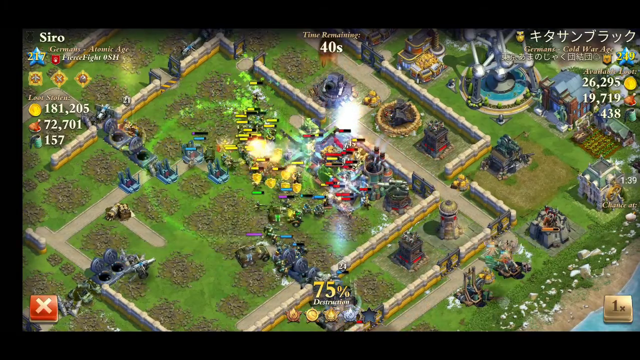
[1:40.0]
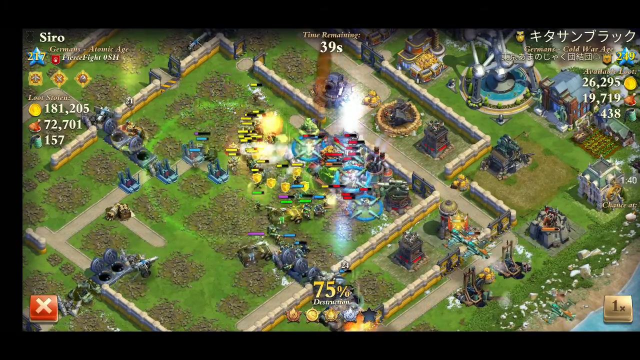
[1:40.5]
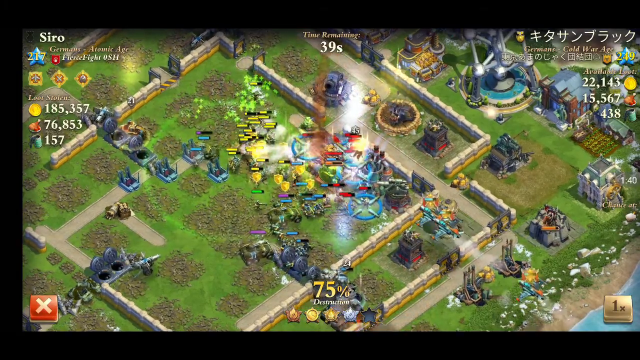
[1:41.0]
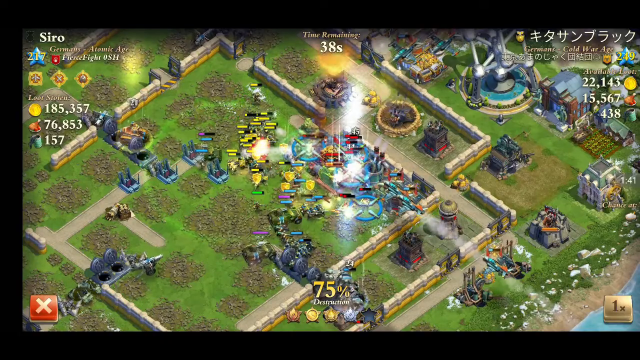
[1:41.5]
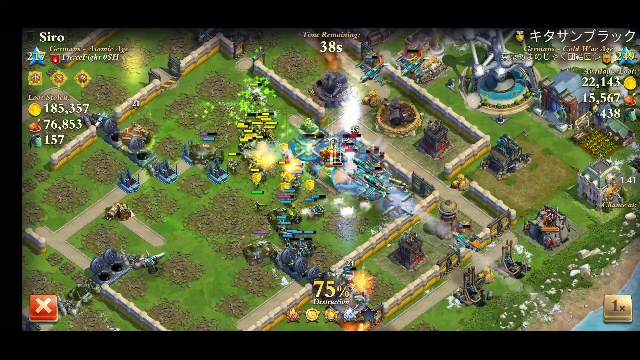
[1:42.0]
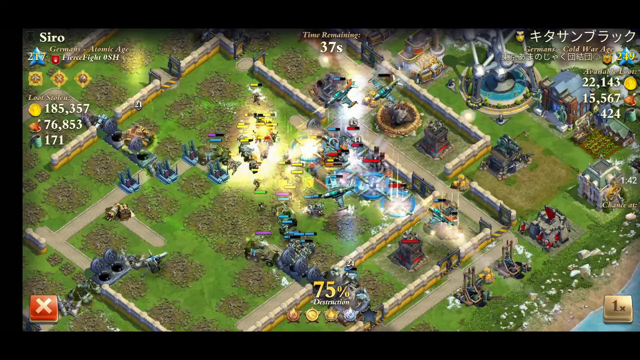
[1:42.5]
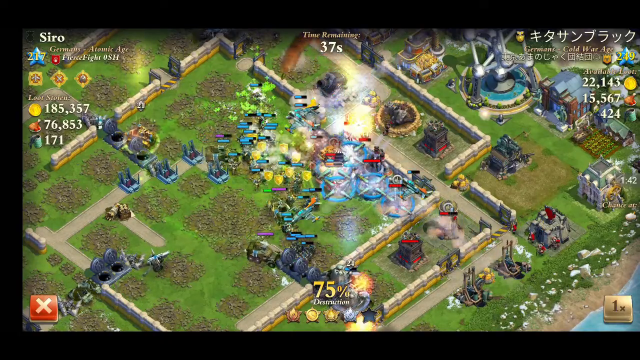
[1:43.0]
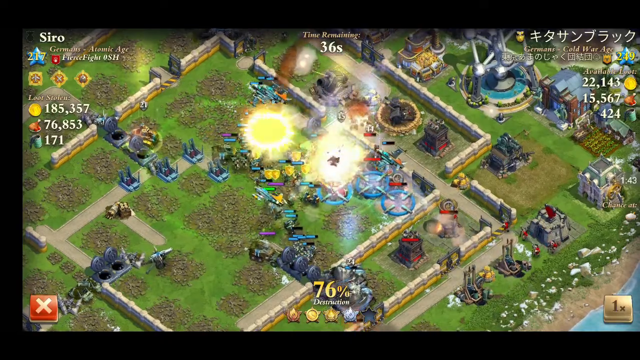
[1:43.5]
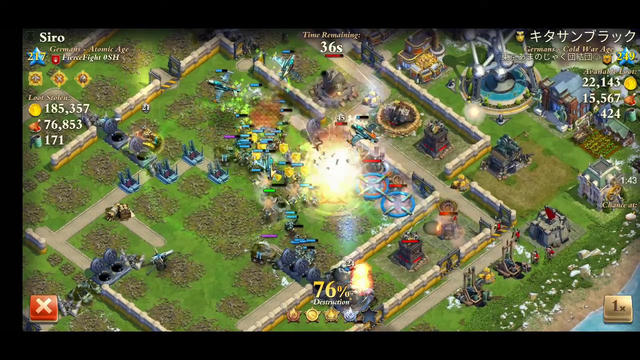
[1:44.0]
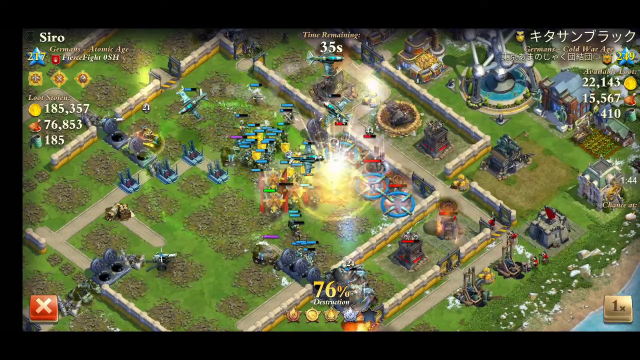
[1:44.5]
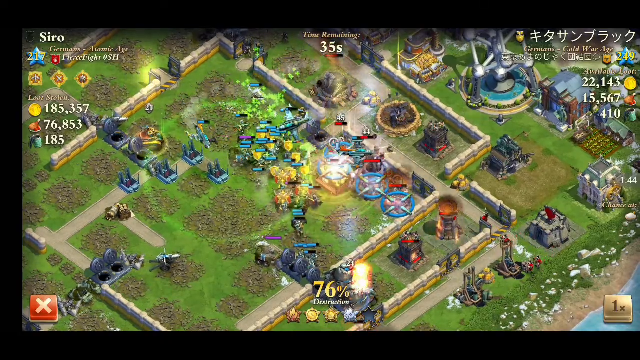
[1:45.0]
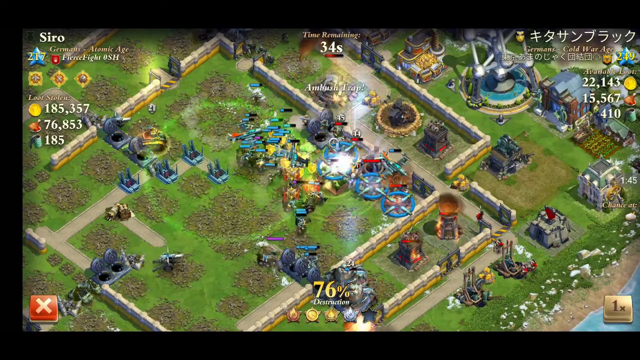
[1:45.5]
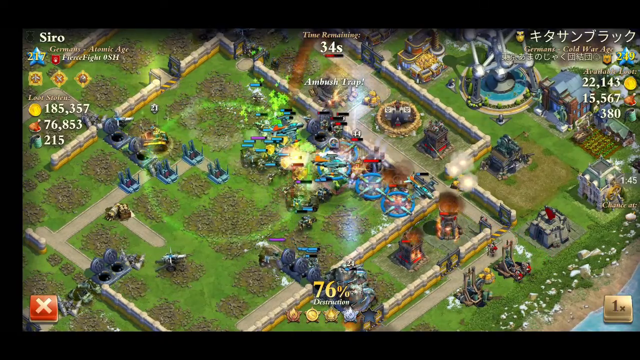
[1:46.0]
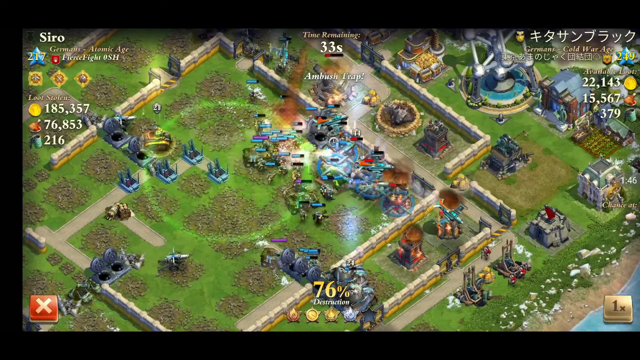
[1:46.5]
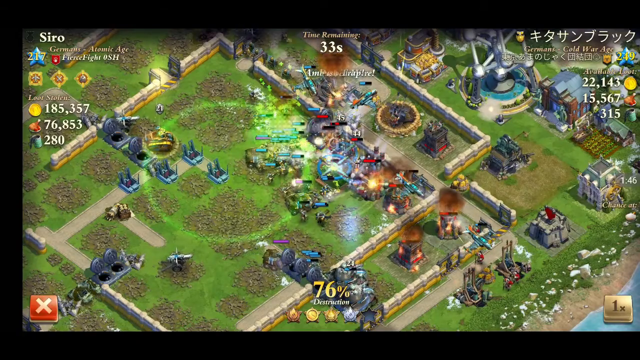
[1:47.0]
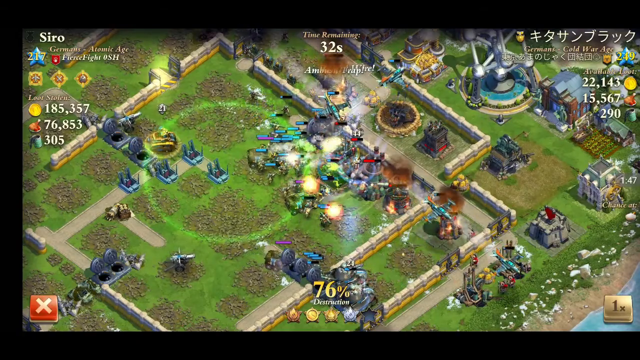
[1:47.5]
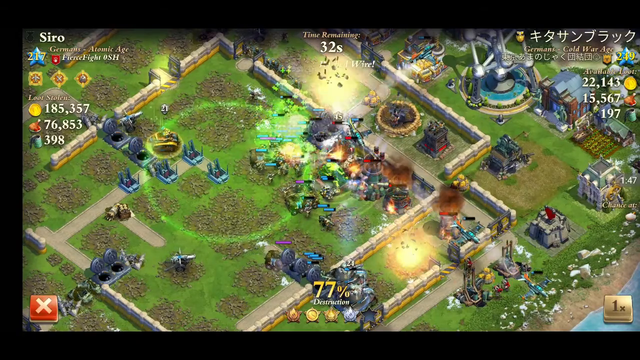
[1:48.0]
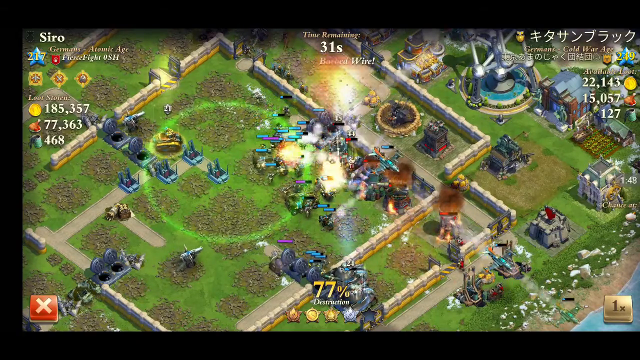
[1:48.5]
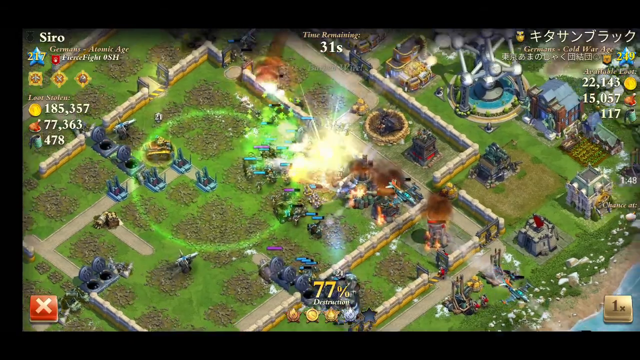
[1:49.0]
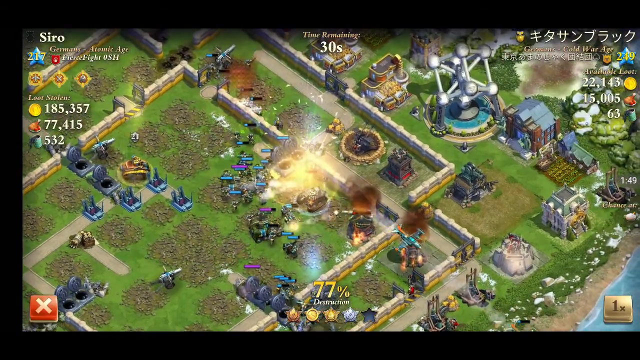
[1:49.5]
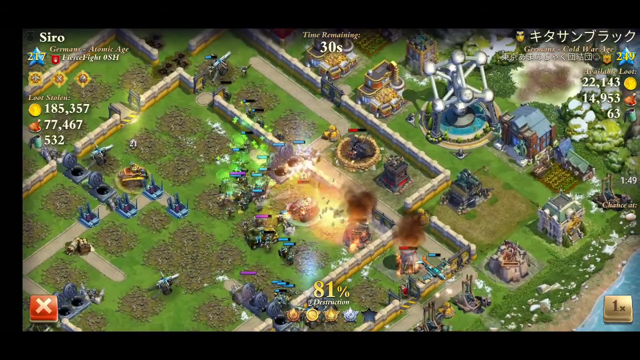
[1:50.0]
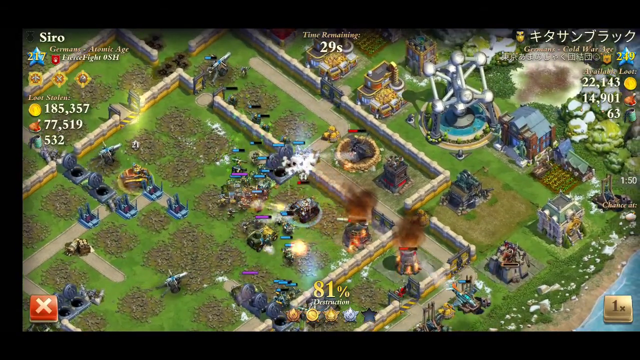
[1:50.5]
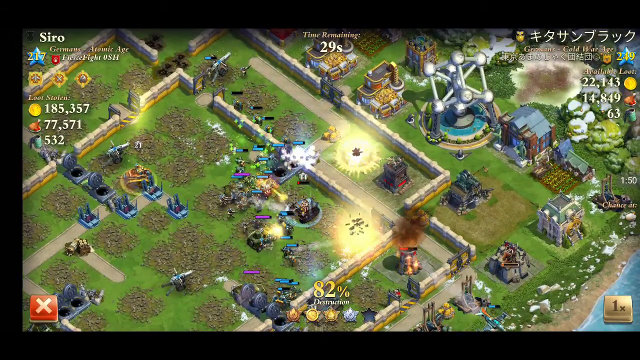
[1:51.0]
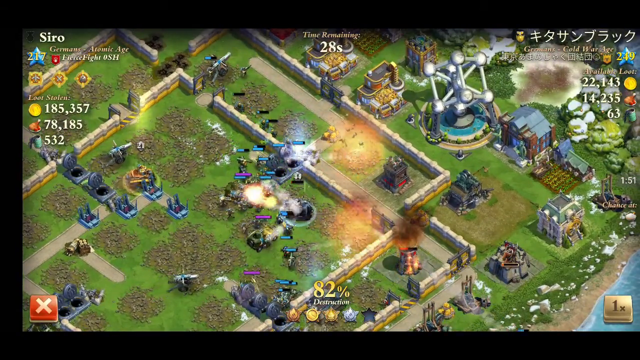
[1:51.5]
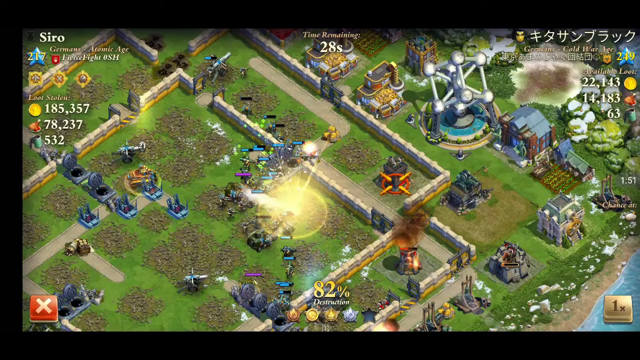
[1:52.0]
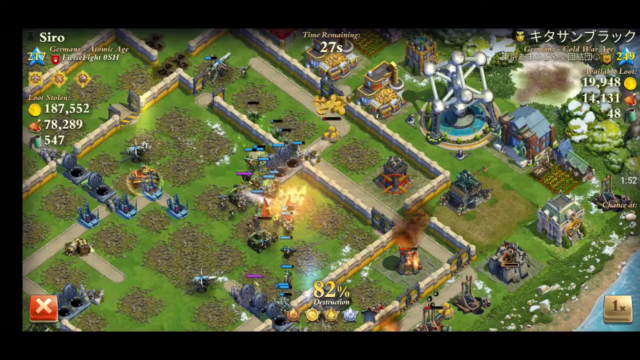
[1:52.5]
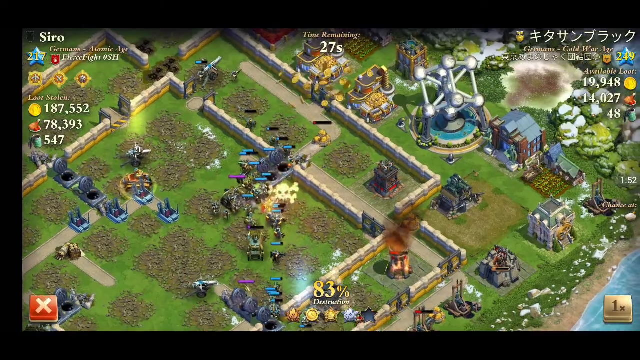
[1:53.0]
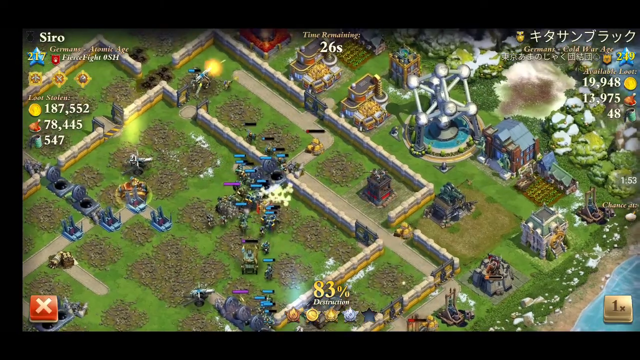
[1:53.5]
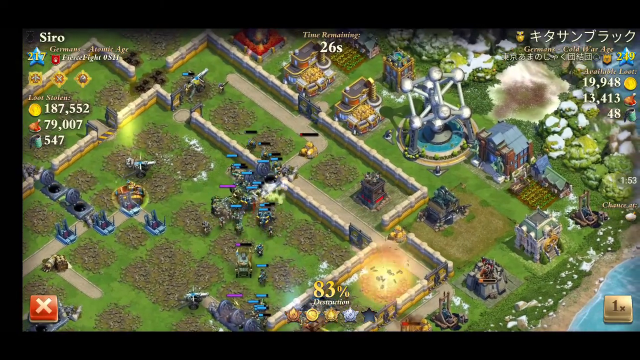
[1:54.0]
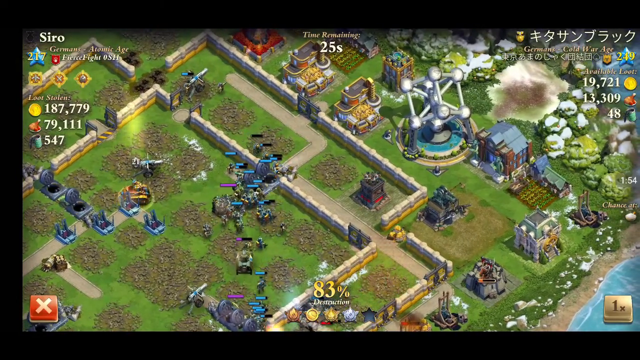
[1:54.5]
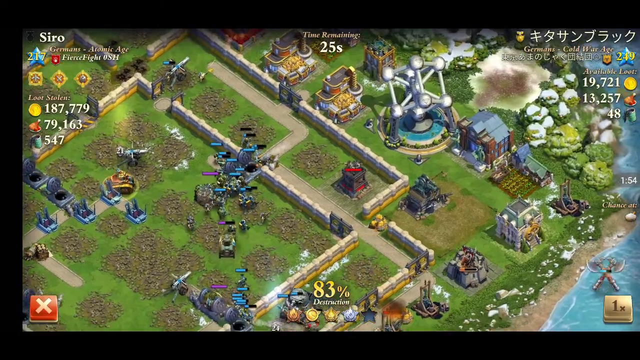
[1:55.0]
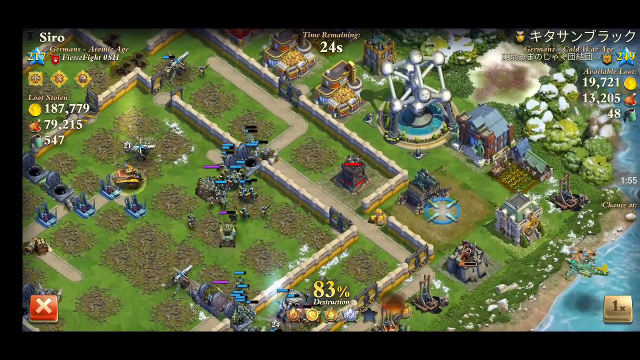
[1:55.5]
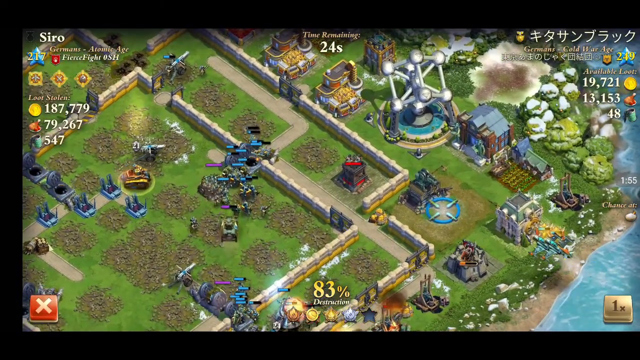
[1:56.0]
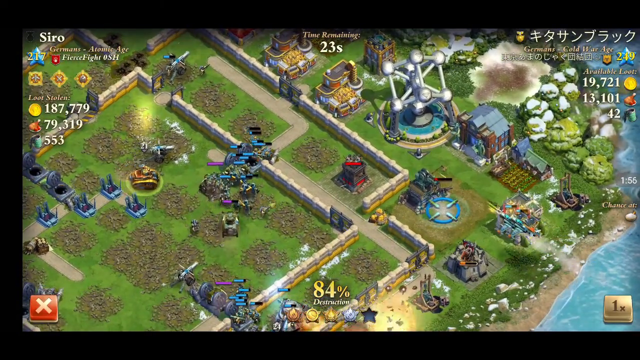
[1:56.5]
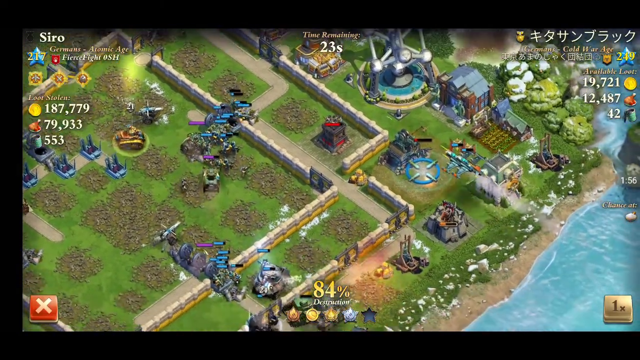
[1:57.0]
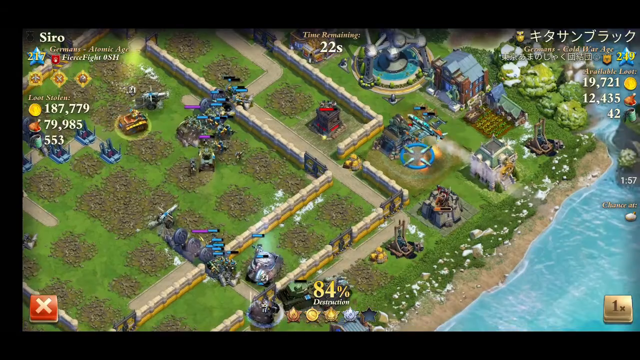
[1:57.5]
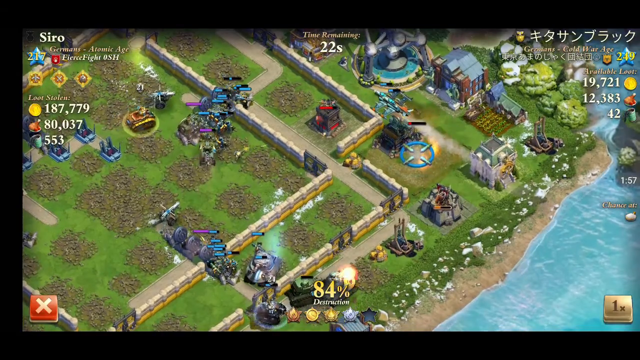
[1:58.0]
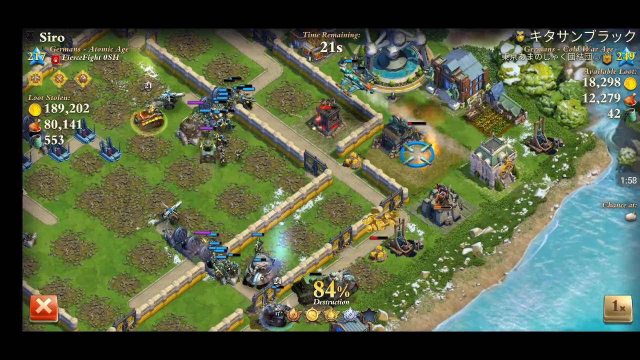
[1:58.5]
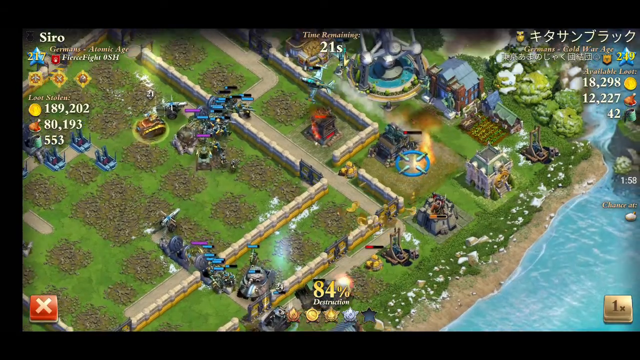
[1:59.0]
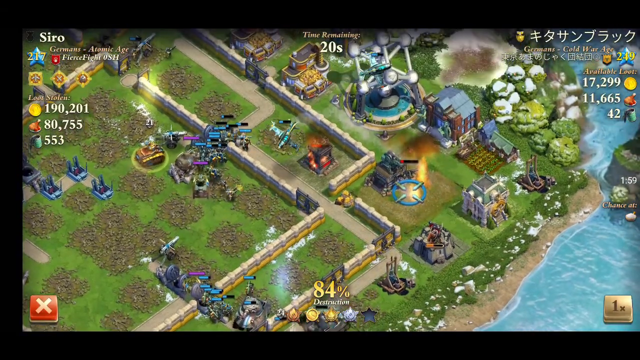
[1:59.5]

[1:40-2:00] The battle seems to be all but won. The attacking player has lost few if any troops, while the defending player keeps losing them quickly. The attacker keeps hitting the defender with airstrikes. Even when a large group of defending enemies appears, the attacker quickly deals with them by concentrating fire and airstrikes on that one area until nothing is left. The destruction reaches 85% within about a minute and a half. All that is left are farmlands, the outer farmlands and some defences.